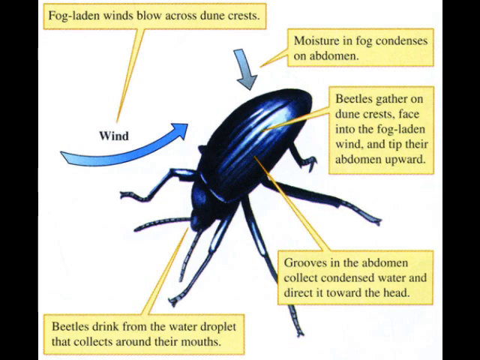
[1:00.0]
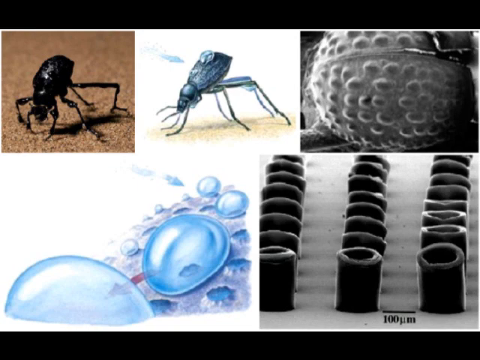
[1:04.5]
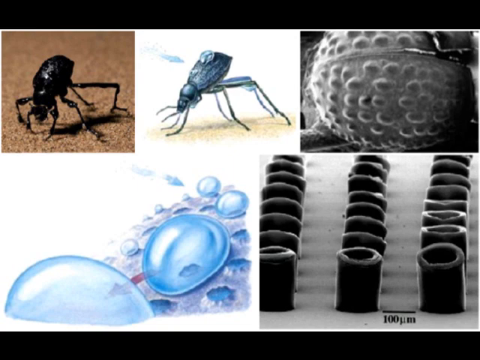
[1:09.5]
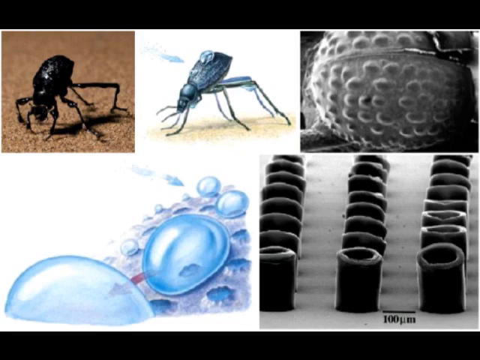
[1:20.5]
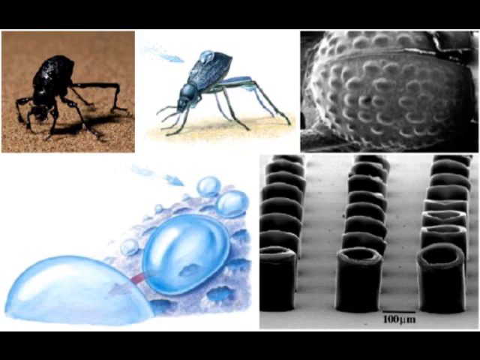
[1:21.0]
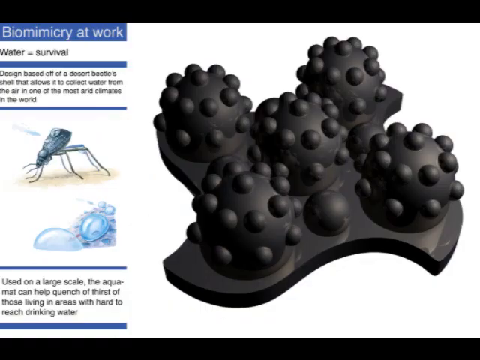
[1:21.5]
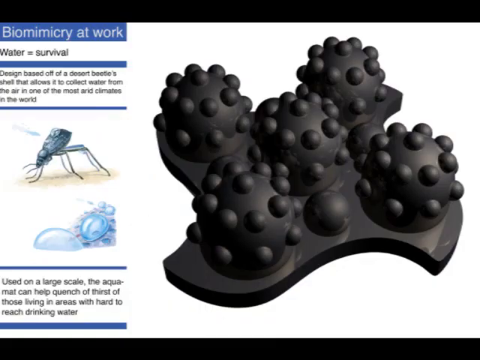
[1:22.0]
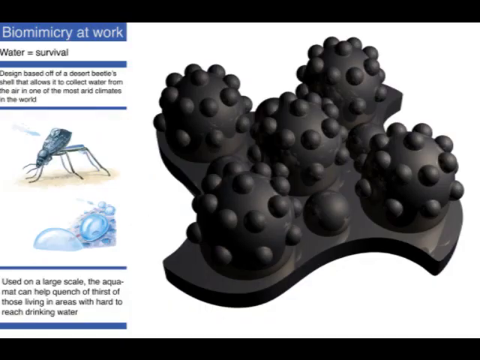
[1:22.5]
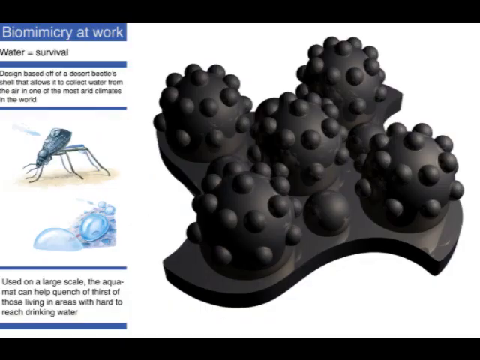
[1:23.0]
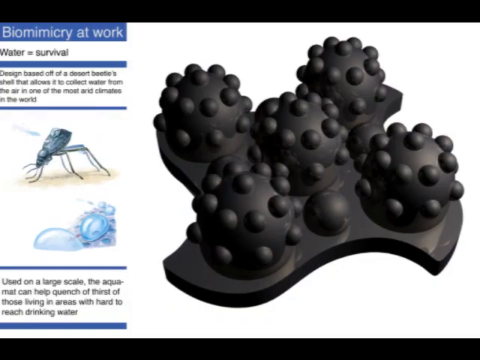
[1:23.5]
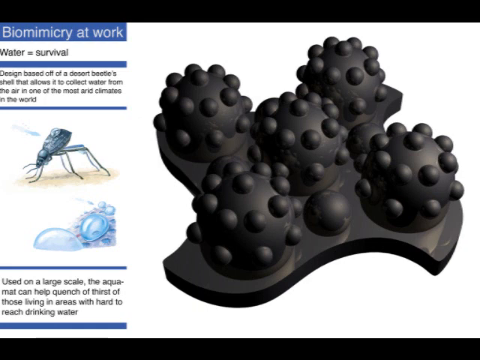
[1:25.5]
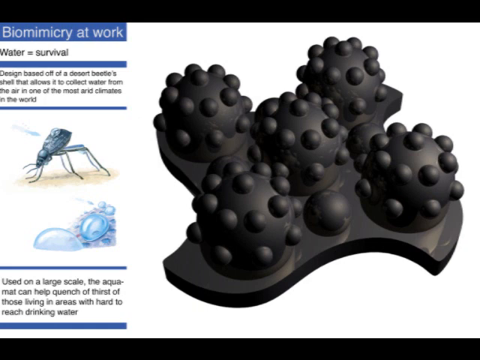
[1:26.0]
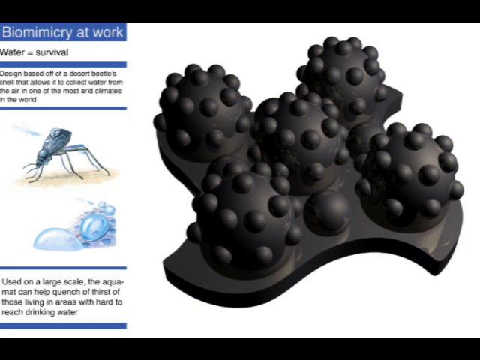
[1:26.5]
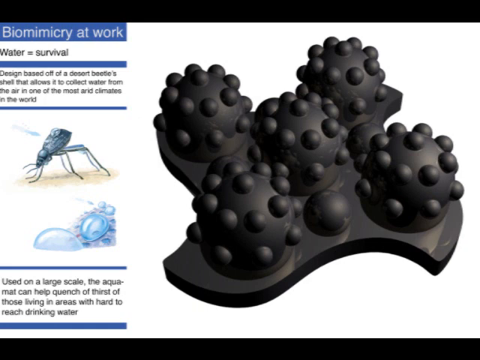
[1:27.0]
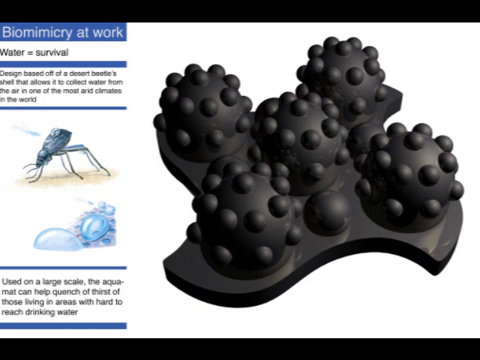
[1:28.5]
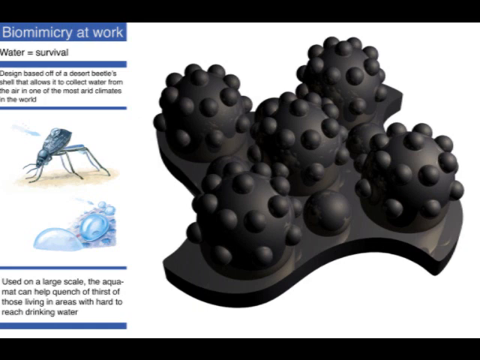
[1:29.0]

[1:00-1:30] The diagram of the black beetle remains on screen, with several boxes of information. The box at the top left says "fog laden winds blow across dune crests"; to the right, one says "moisture and fog condenses on abdomen"; the one below that says "beetles gather on dune crests face into the fog laden wind and tip their abdomen upward"; below that, one says "grooves in the abdomen collect condensed water and direct it toward the head"; and the bottom left box says something along the lines of "beetles drink from the water droplet that collects around their mouths." A black beetle is in the middle of the screen, and black and white images of different diagrams appear on the bottom right and top right of the page.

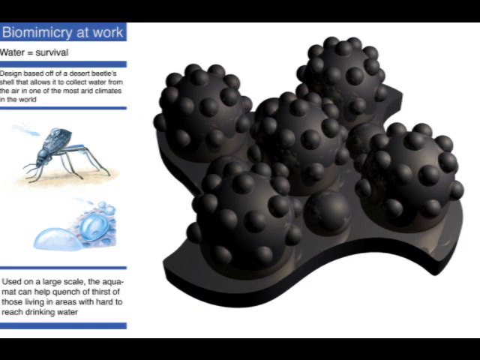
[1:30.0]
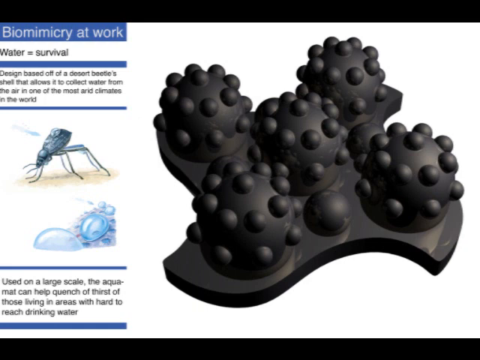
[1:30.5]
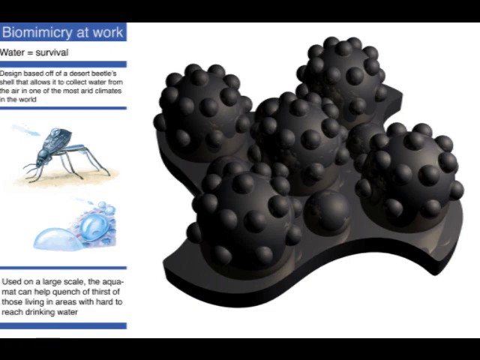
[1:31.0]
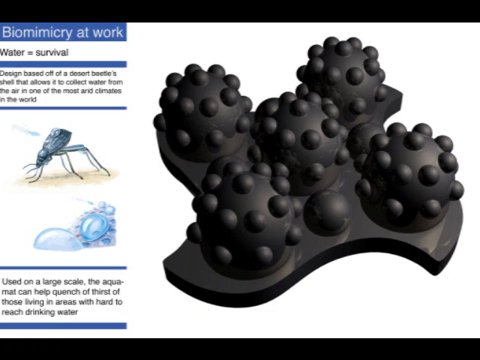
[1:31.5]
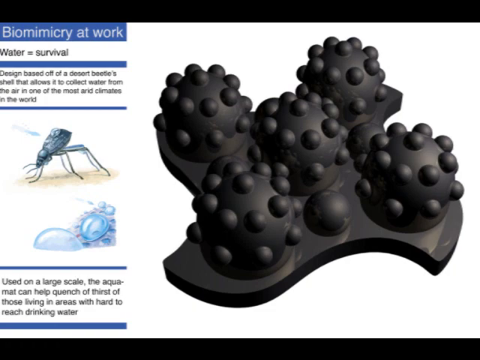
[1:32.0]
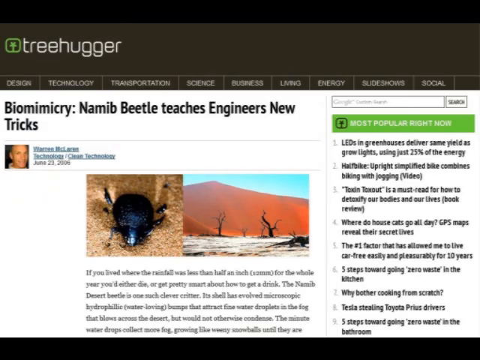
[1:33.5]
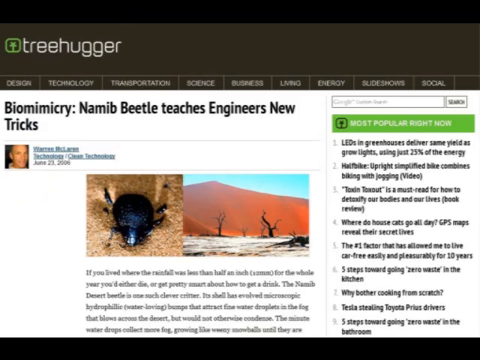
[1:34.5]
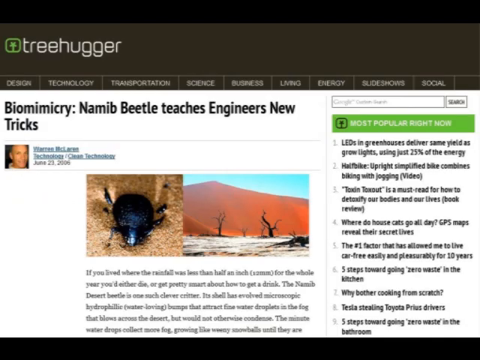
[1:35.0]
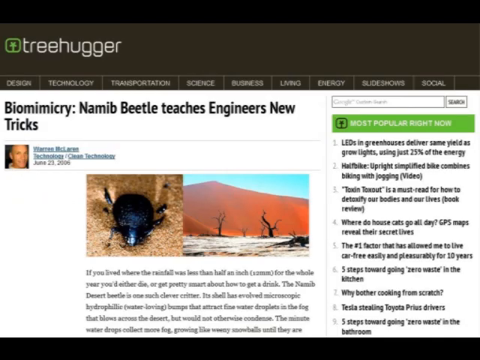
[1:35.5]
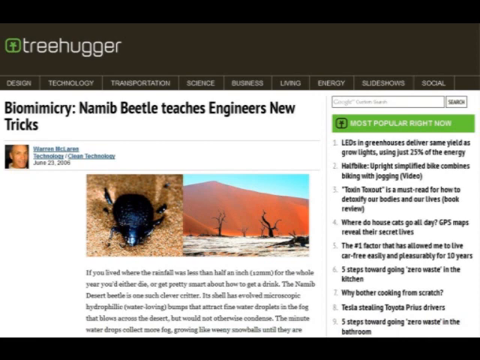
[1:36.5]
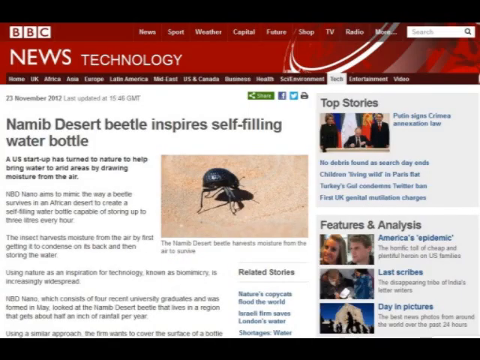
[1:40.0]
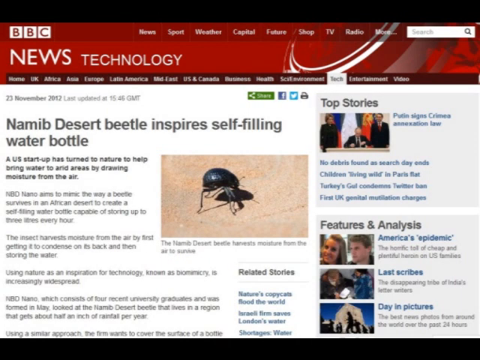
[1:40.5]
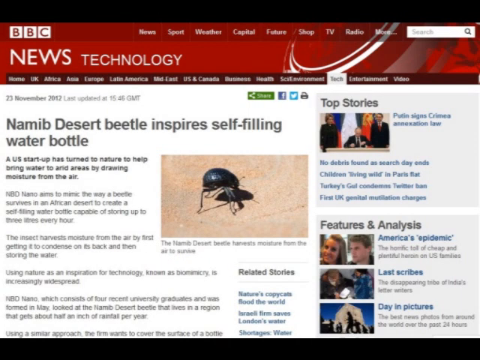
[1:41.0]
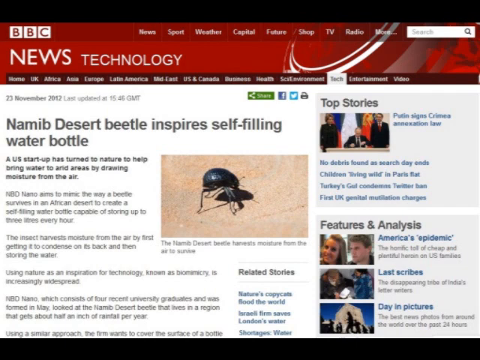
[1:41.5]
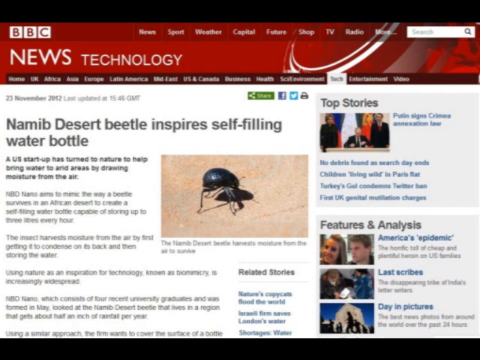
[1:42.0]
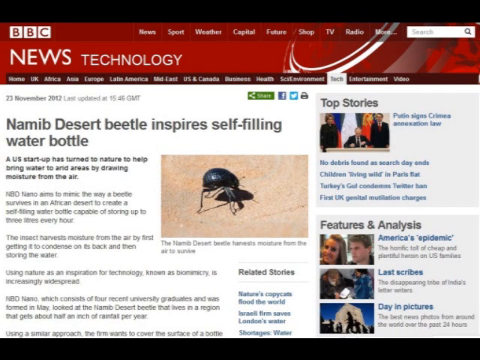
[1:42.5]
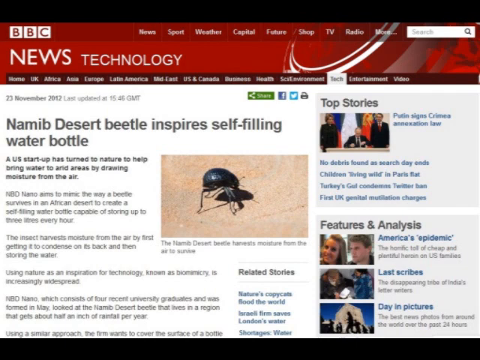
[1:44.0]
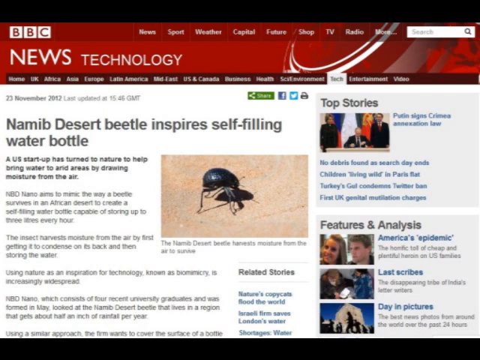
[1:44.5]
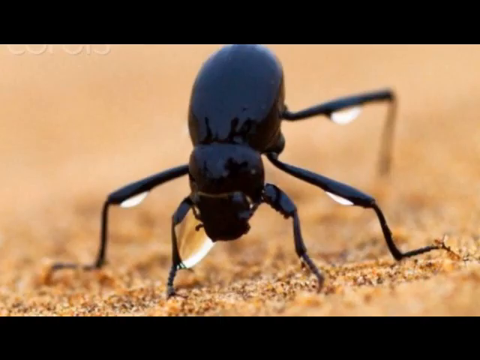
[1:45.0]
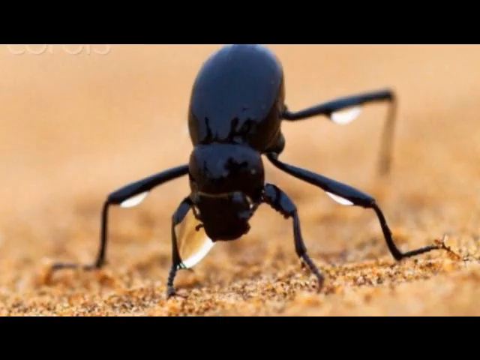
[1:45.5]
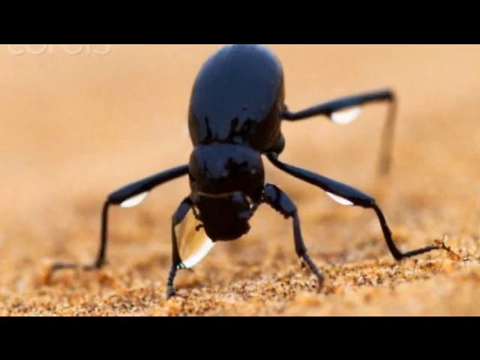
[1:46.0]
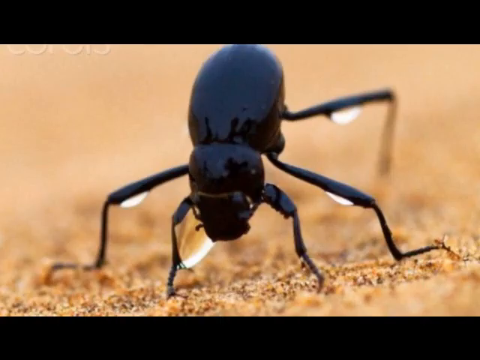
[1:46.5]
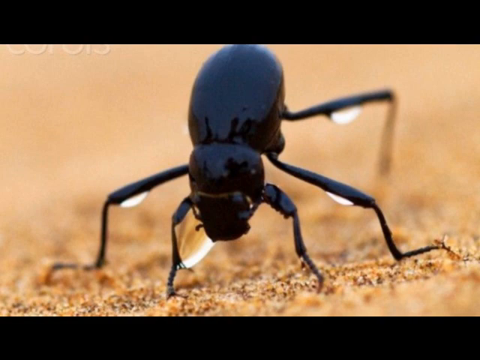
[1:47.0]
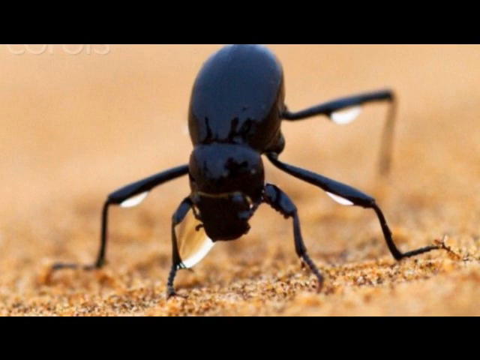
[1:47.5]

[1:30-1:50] A black 3D animated graphic shows five different things with little bumps on them. Text on the left side says "bio mimicry at work water equals survival design based off a desert beetles shell that allows it to collect water from the air in one of the most arid climates in the world." Below it is a drawing of a beetle and a microscopic view of it with little droplets of water on its back. More text at the bottom says "used on a large scale the aquamat can help quench a thirst of those living in areas with hard to reach drinking water." The video then cuts to an article about bio mimicry, and to multiple articles about it from BBC News.